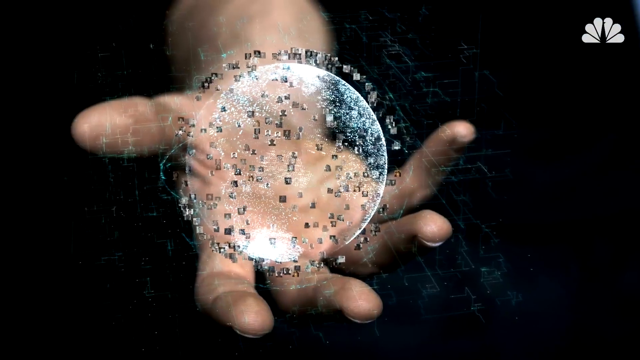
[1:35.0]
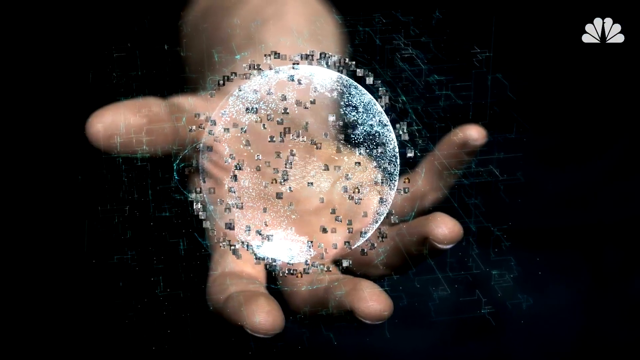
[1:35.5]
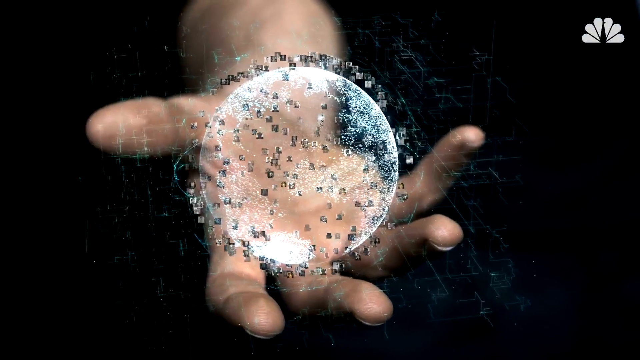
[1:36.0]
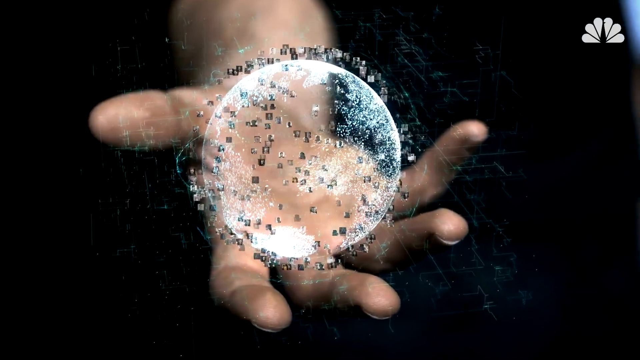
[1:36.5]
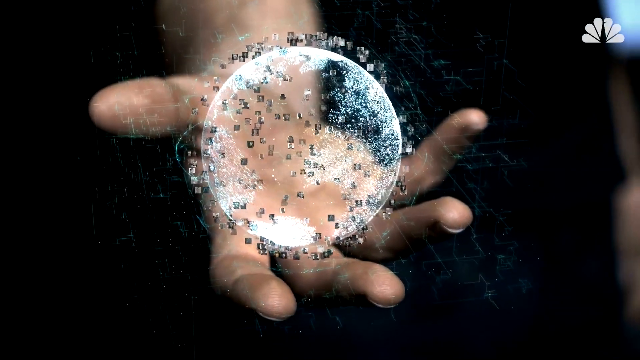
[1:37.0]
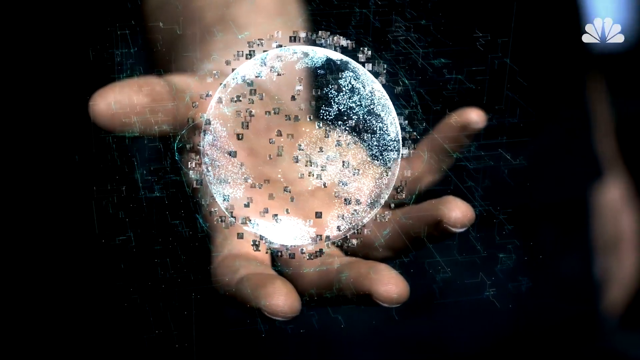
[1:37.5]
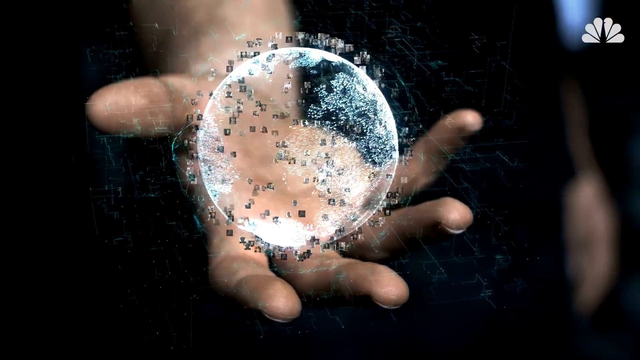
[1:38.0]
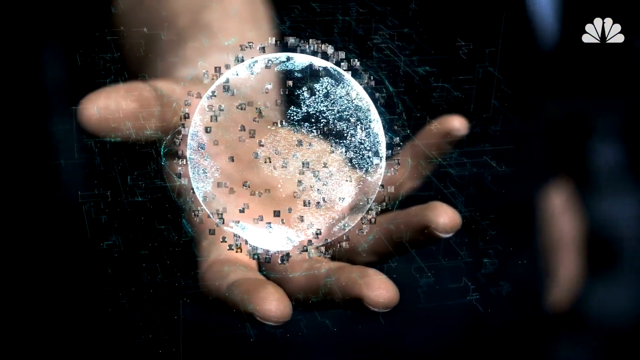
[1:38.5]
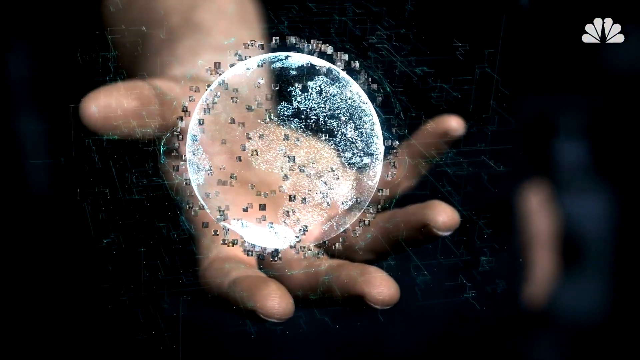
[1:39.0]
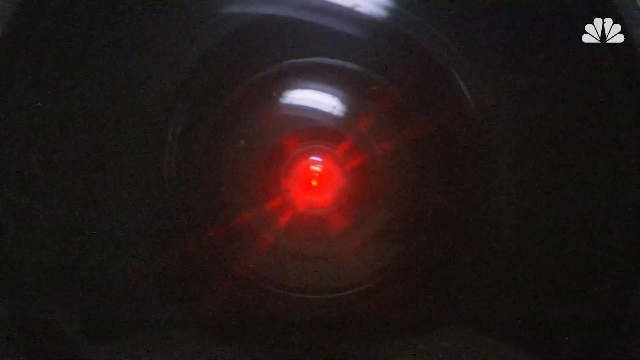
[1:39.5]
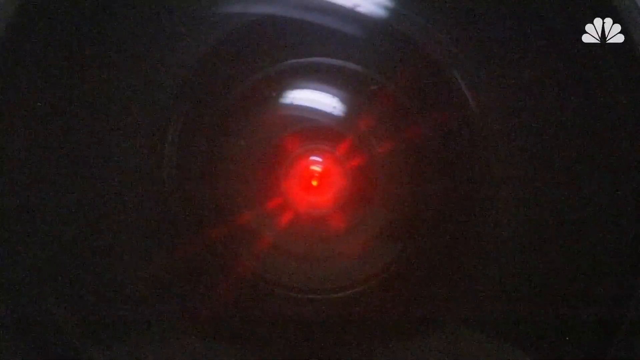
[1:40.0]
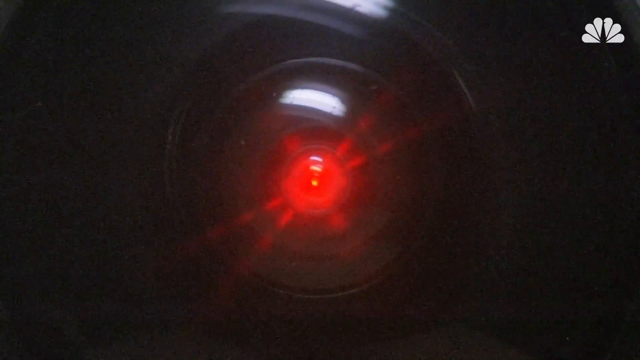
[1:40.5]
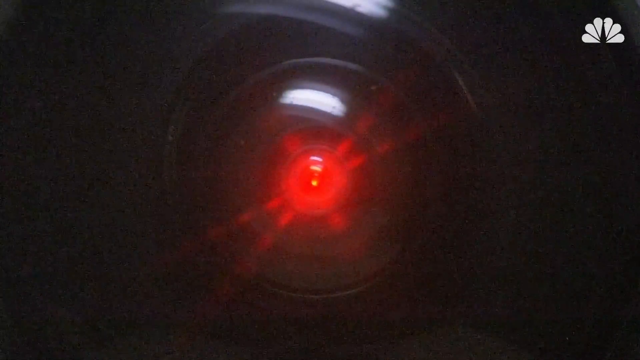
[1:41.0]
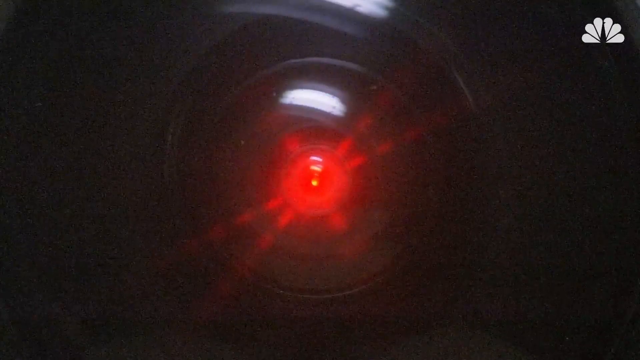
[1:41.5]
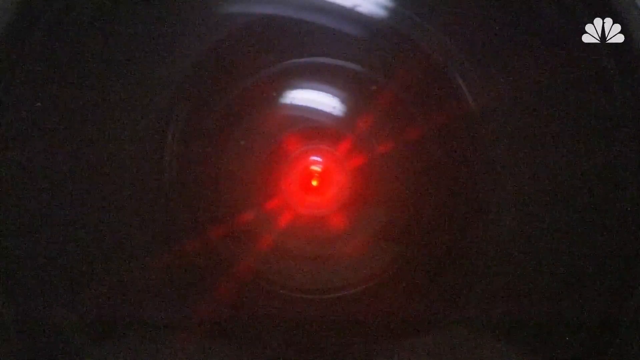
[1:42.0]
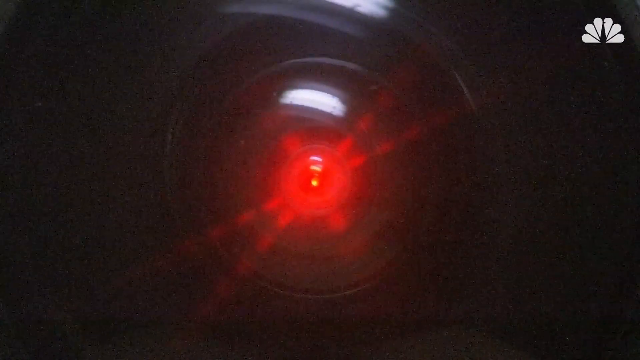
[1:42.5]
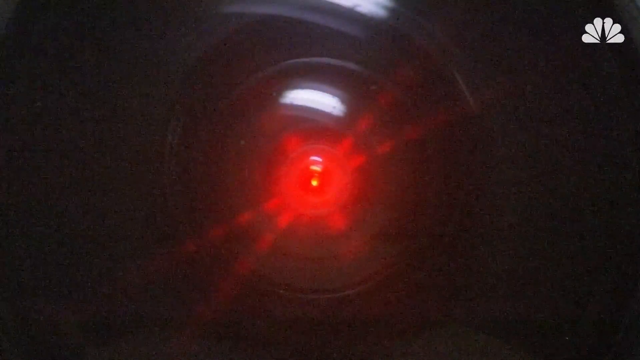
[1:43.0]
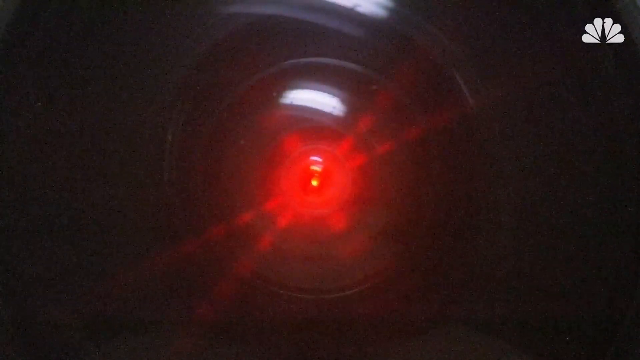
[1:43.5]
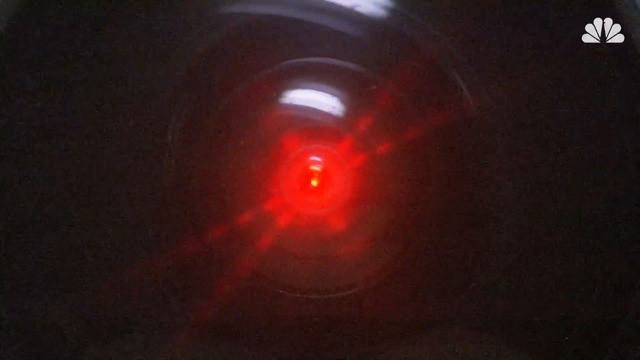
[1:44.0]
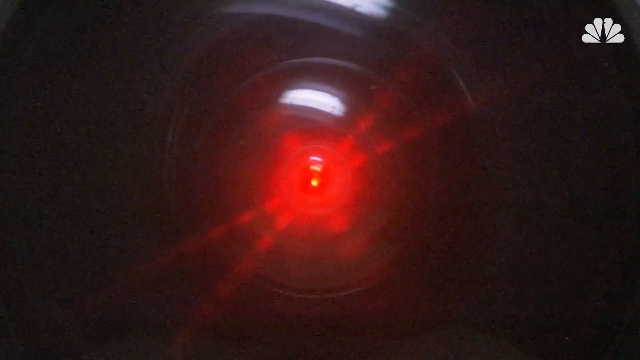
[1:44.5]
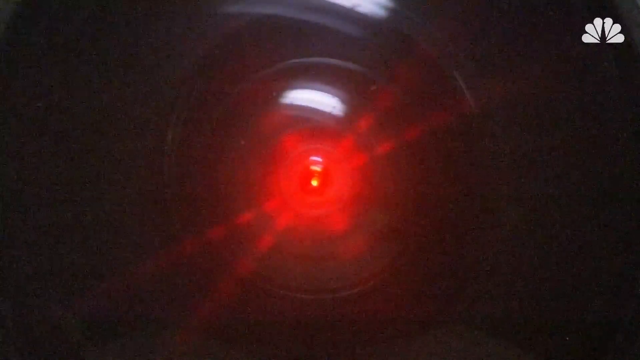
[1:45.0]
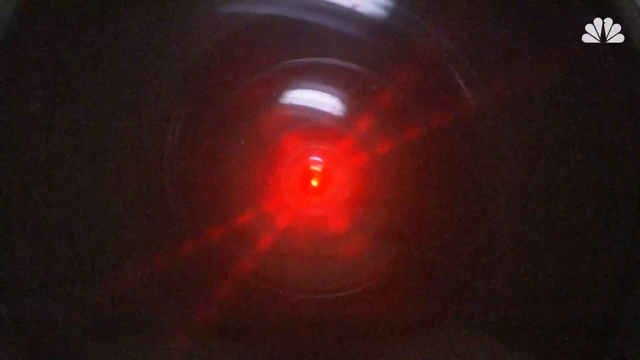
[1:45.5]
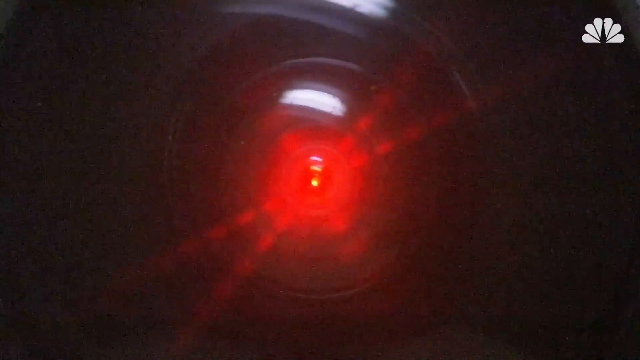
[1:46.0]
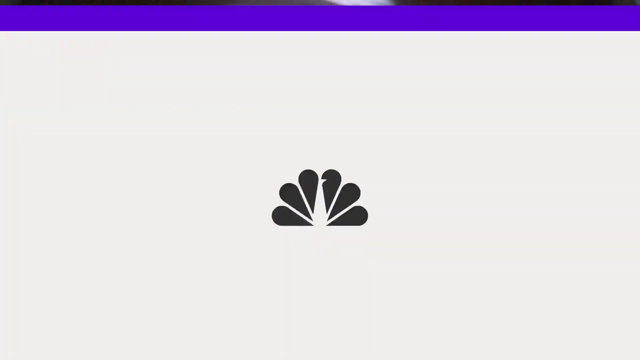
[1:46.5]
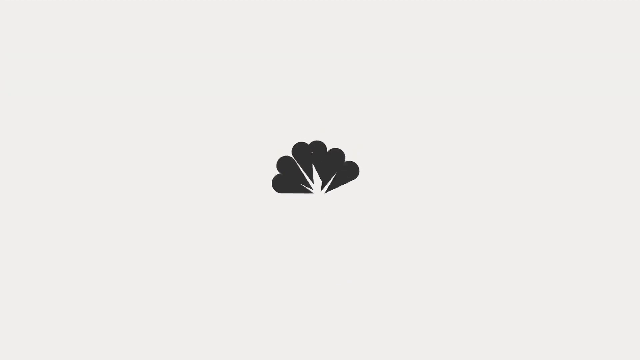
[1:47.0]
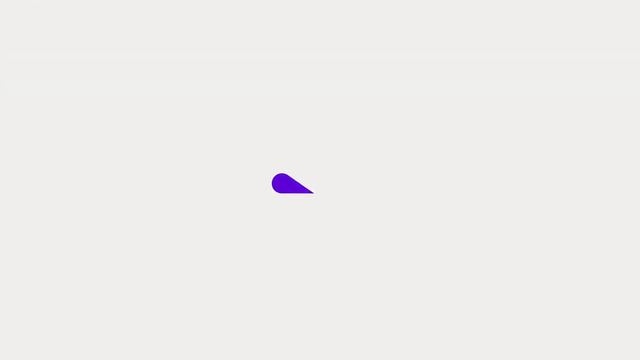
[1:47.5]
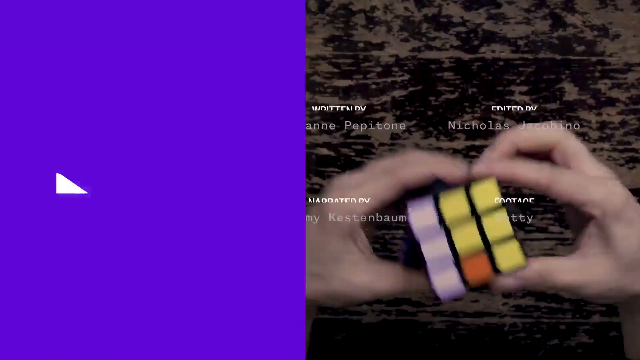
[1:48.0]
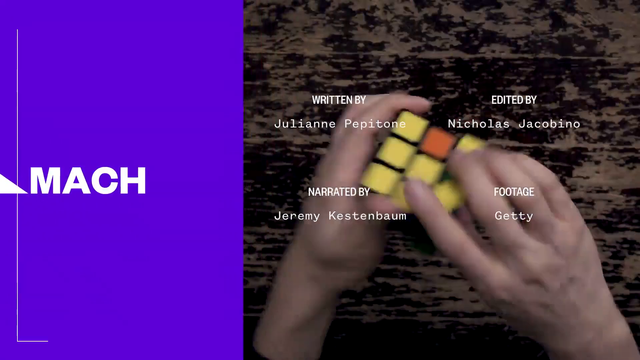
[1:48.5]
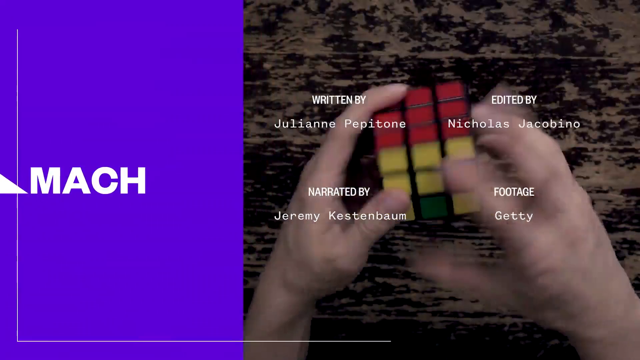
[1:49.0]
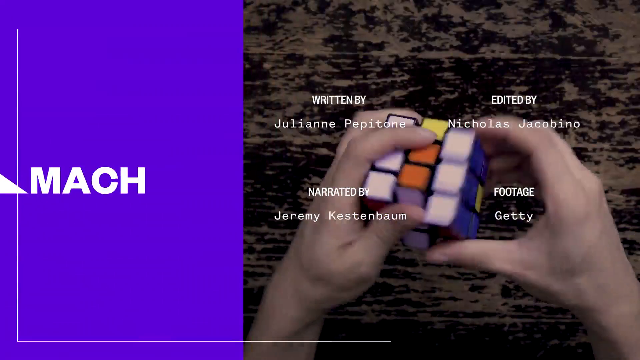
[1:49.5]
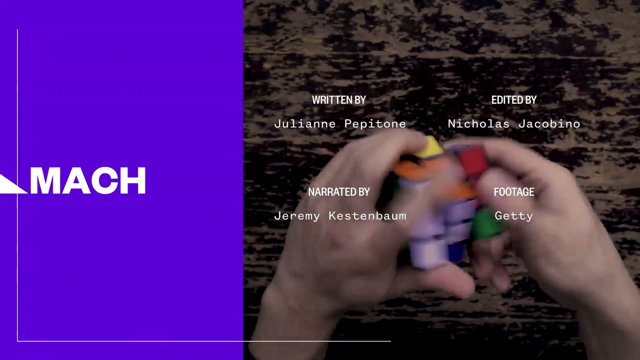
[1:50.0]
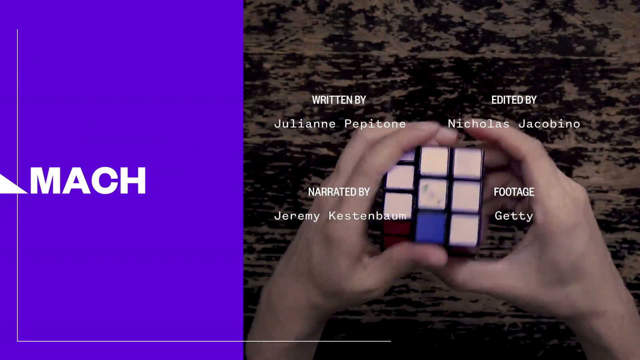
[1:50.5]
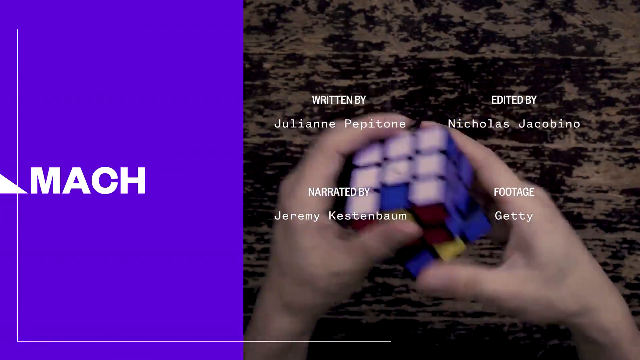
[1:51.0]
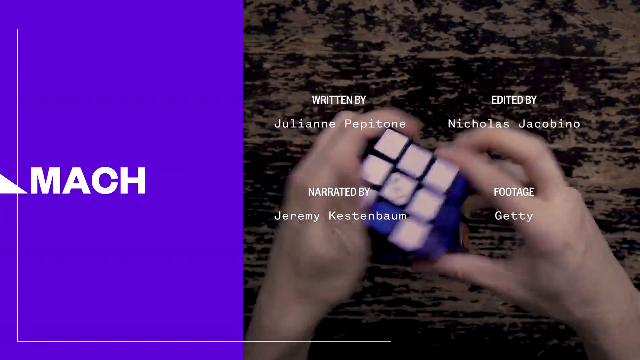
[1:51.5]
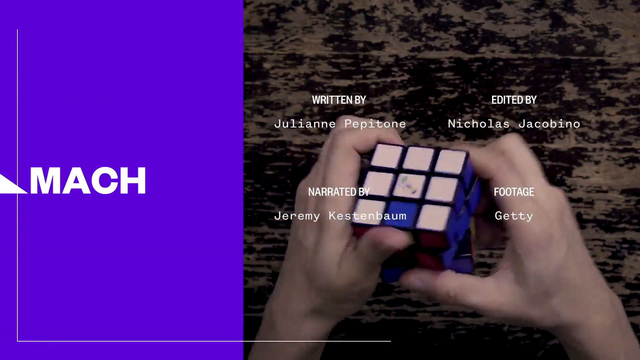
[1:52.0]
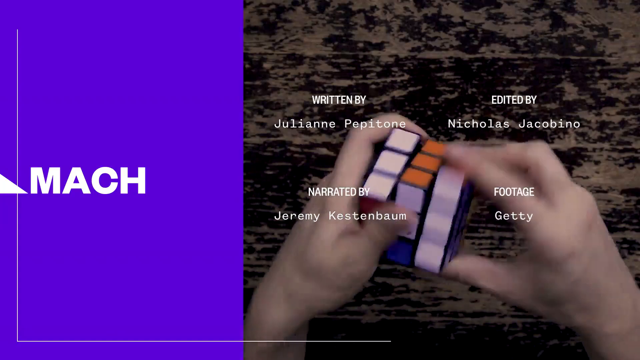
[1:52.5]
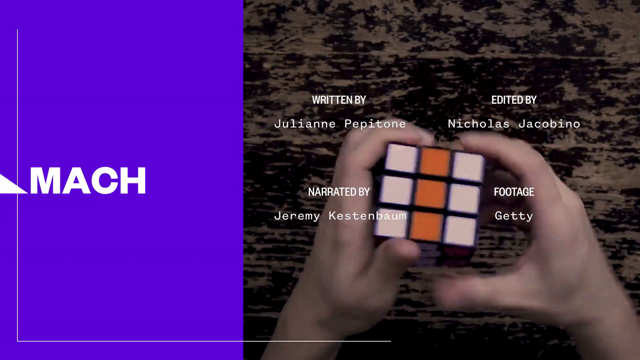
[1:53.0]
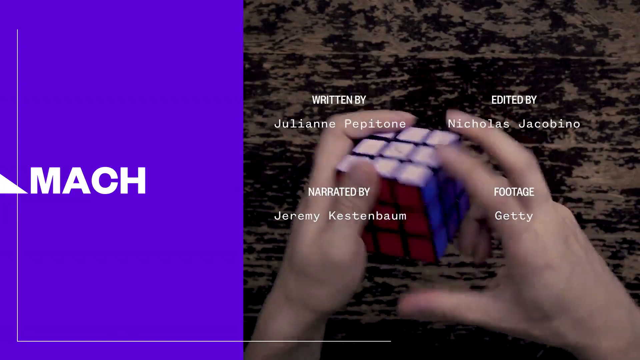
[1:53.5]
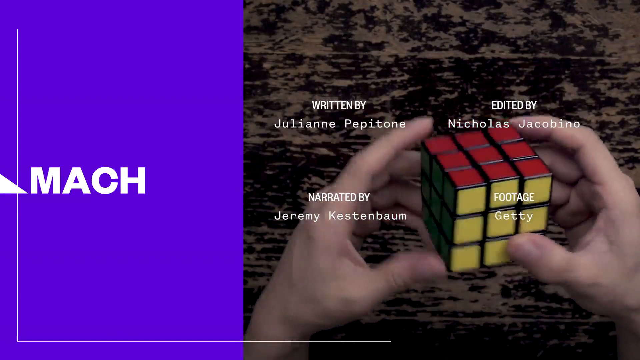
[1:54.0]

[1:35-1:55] Against a dark background, a hand holds an illuminated sphere, almost as if holding light: not really a globe but lights in the shape of a sphere, rotating, with many letters floating all around it, very white and bright. The video switches to a very dark, lens-like object with a bright red light radiating out of it, growing brighter and brighter. Then the man solving the Rubik's Cube is shown again, with a purple graphic on the left that reads "Mach." White text or credits appear over the top of the Rubik's Cube, possibly advertising the show. The video then cuts to what looks like more news-type graphics.